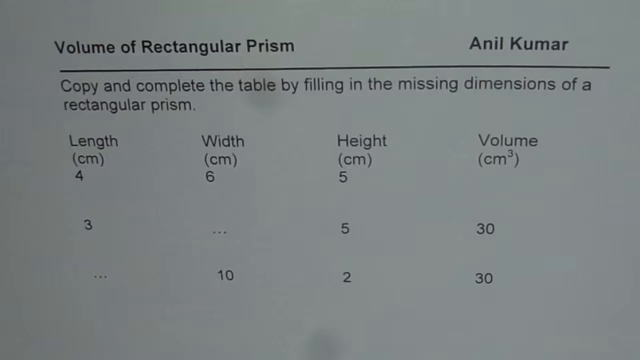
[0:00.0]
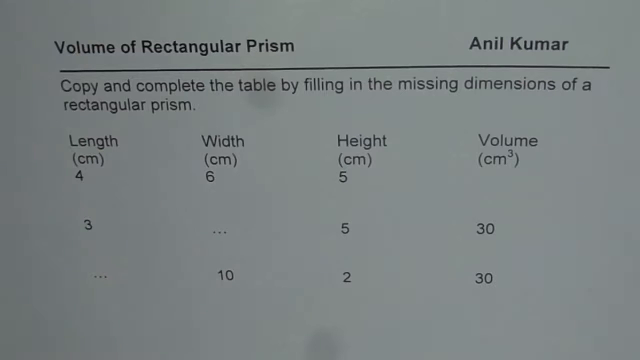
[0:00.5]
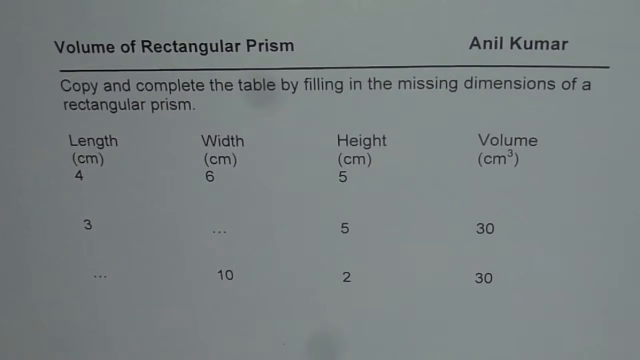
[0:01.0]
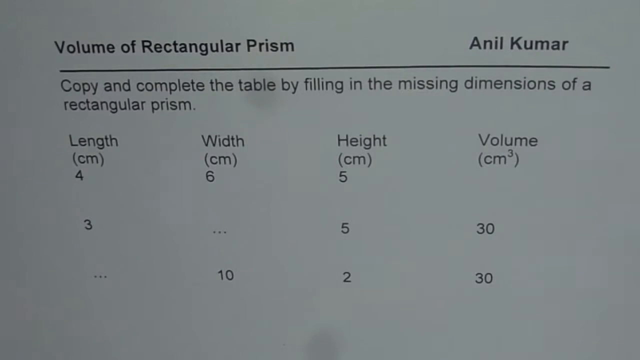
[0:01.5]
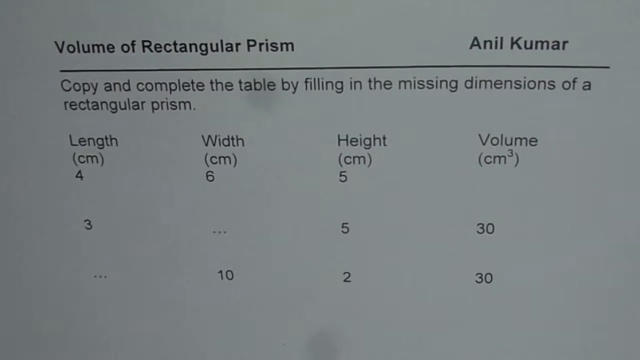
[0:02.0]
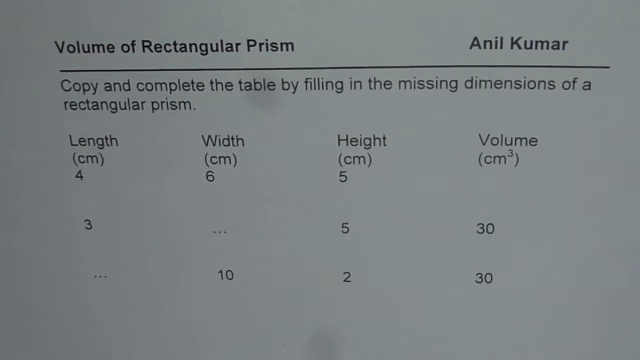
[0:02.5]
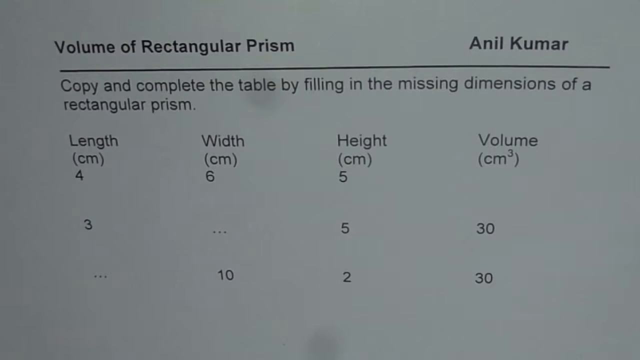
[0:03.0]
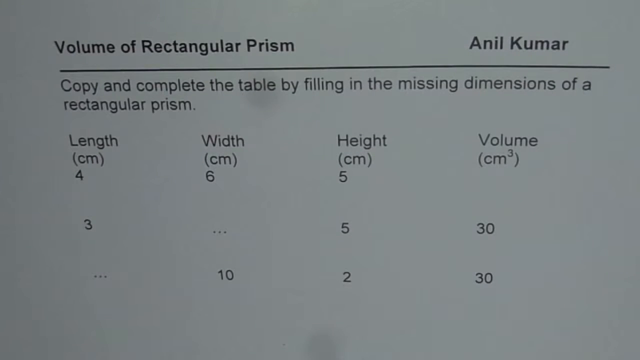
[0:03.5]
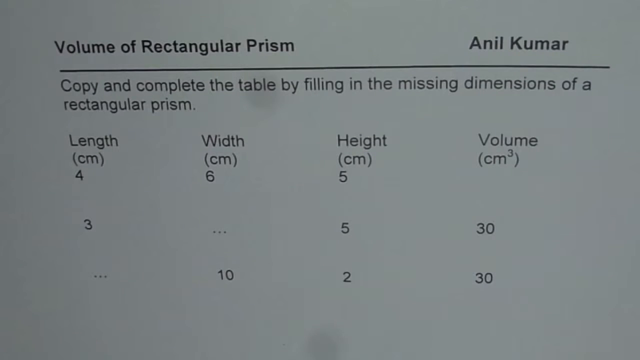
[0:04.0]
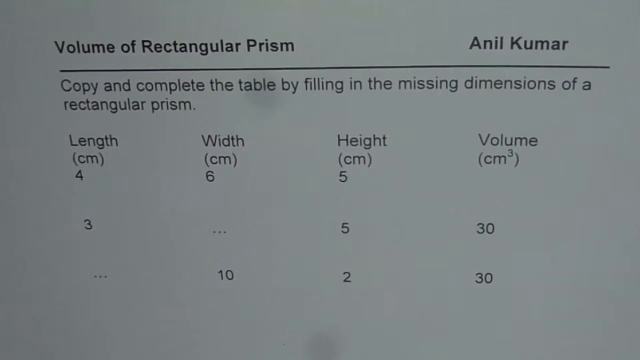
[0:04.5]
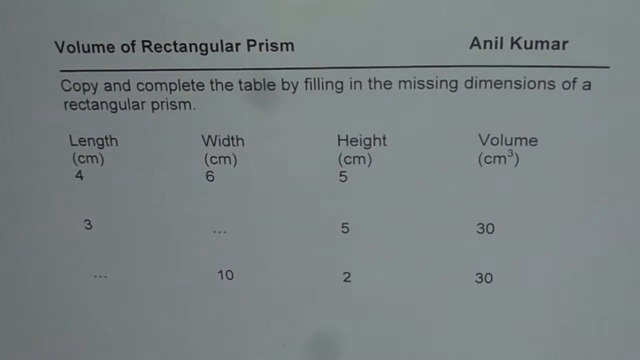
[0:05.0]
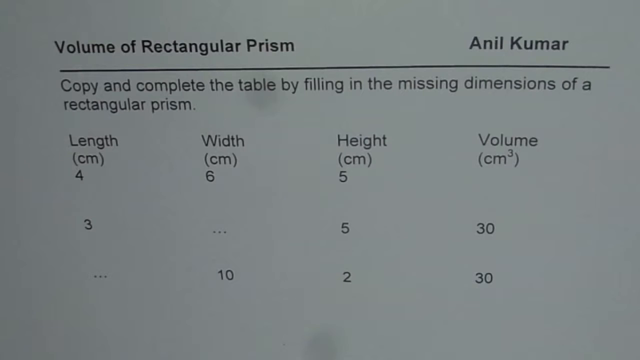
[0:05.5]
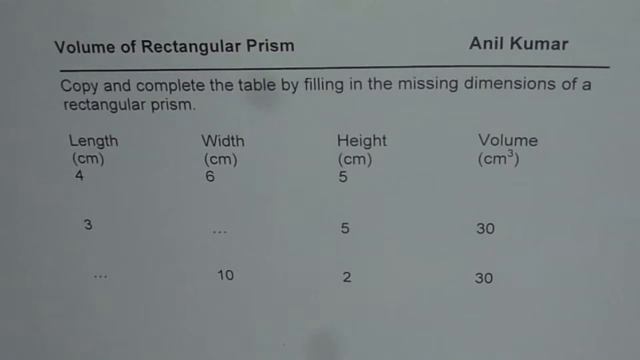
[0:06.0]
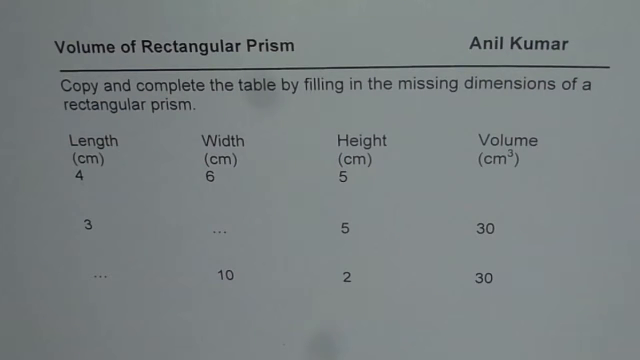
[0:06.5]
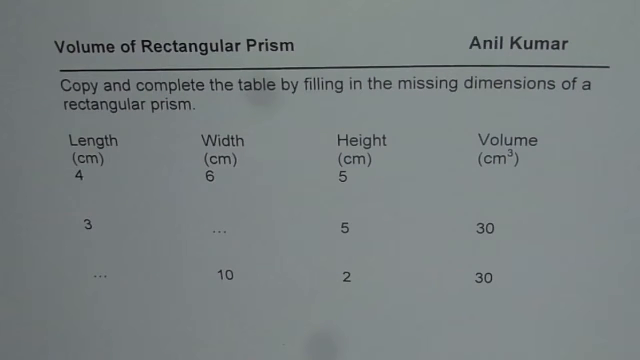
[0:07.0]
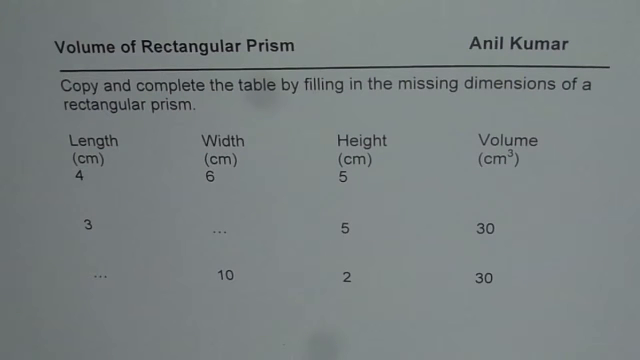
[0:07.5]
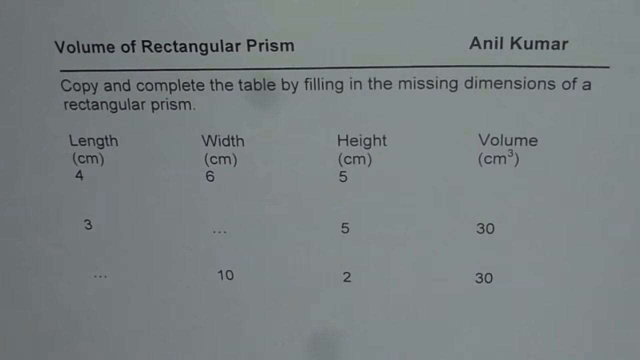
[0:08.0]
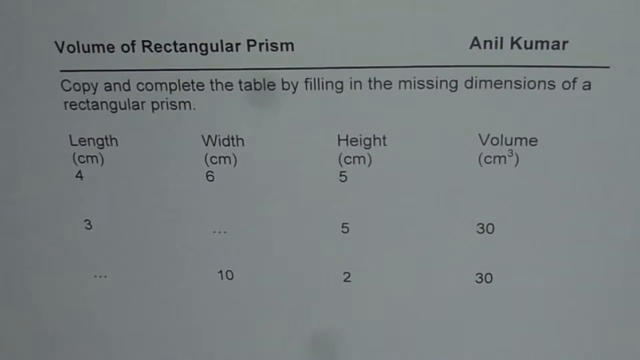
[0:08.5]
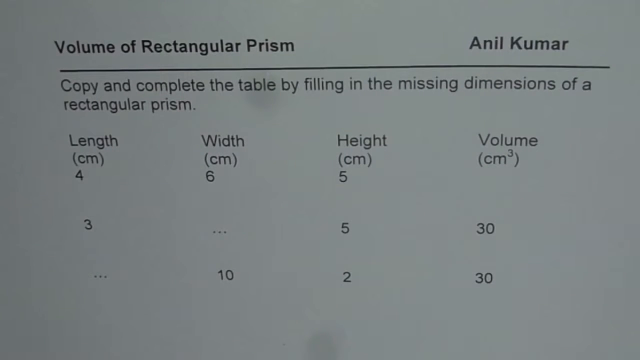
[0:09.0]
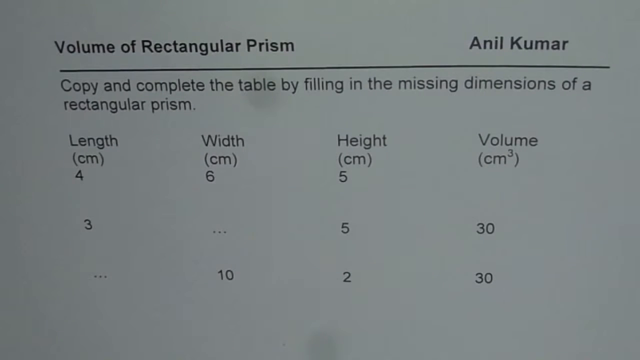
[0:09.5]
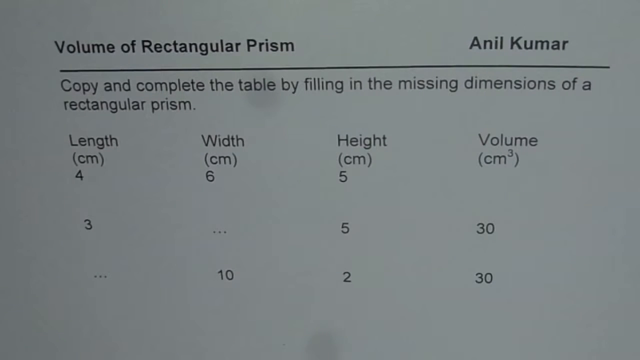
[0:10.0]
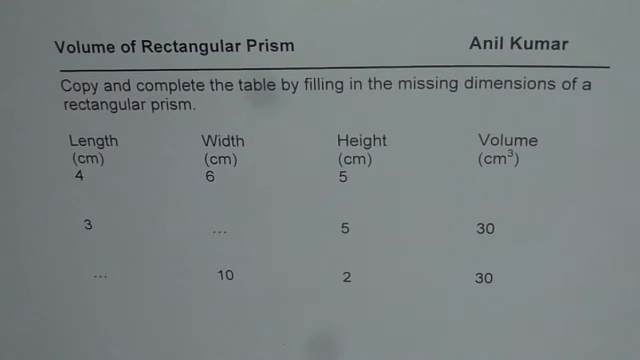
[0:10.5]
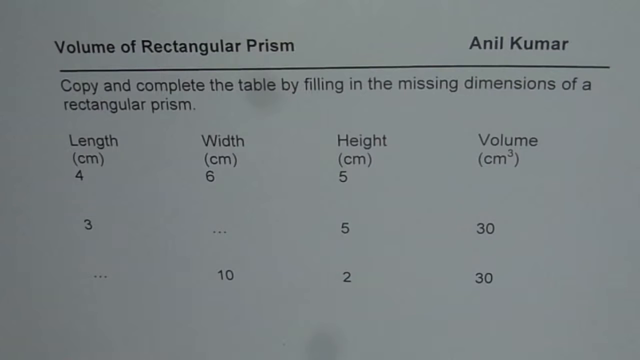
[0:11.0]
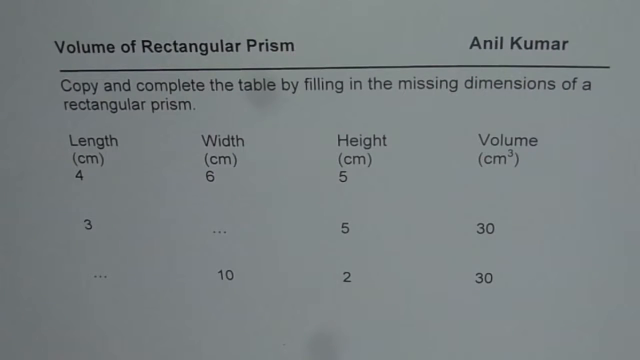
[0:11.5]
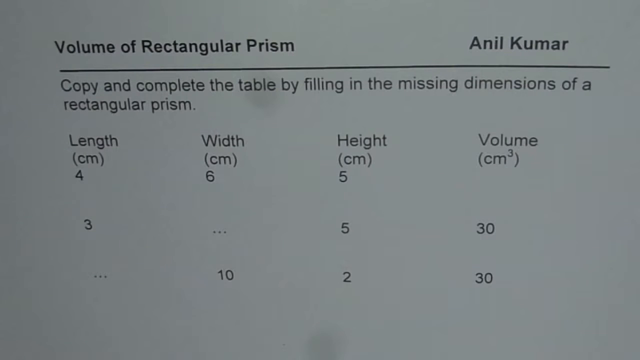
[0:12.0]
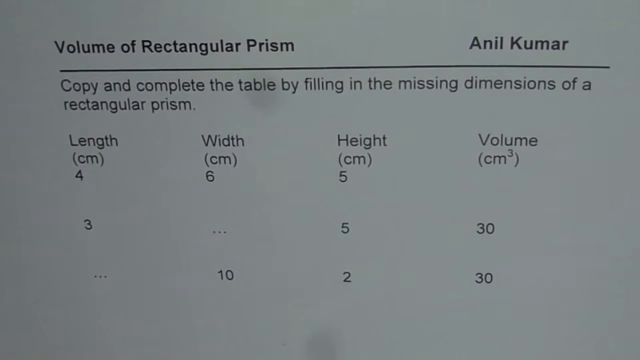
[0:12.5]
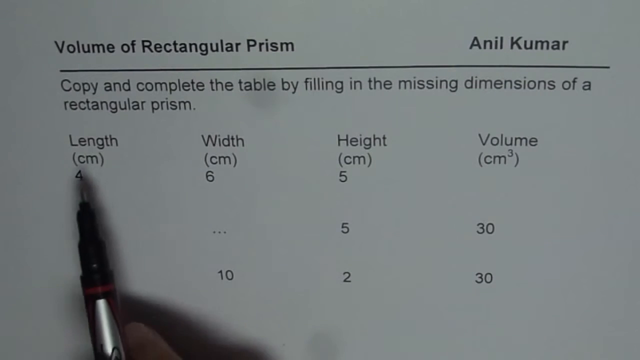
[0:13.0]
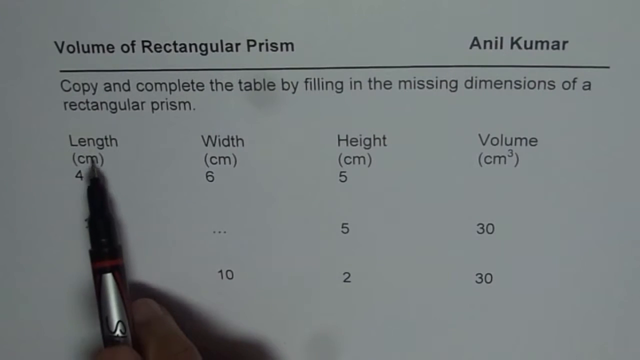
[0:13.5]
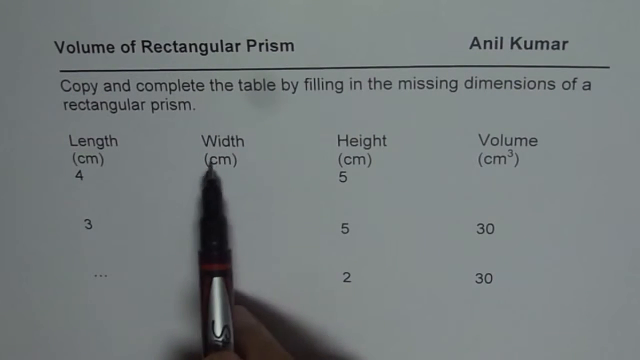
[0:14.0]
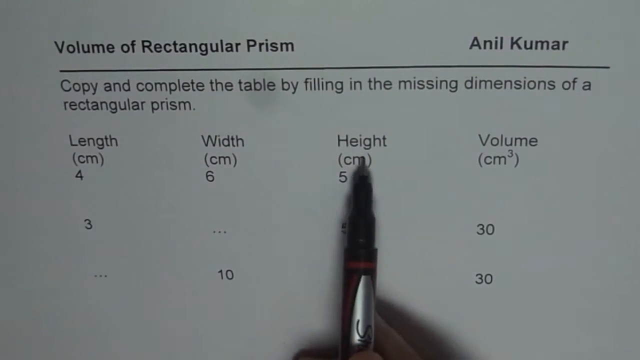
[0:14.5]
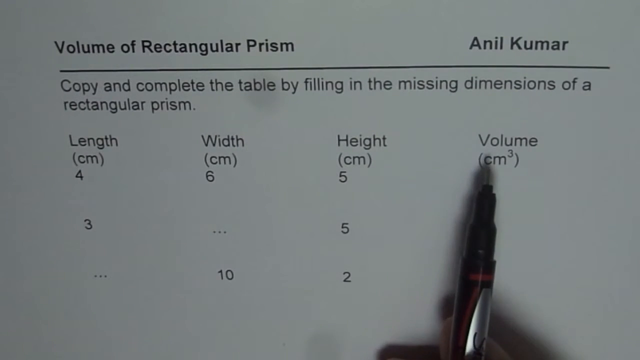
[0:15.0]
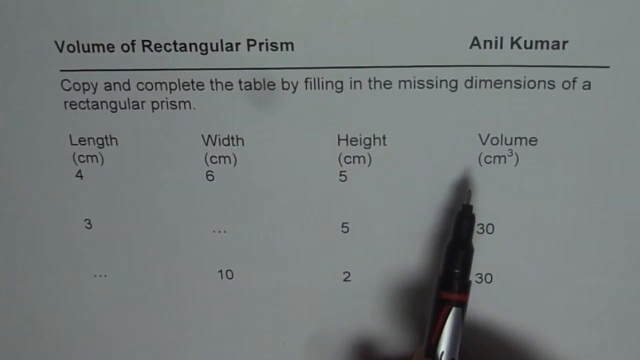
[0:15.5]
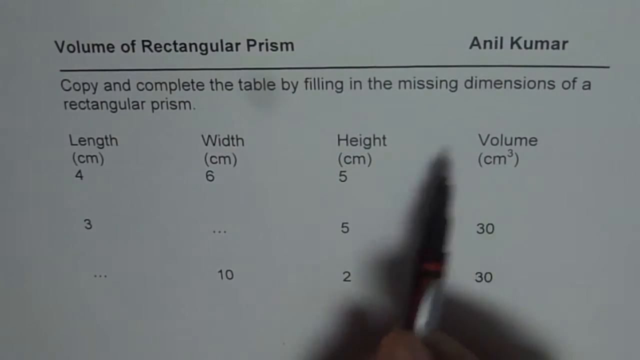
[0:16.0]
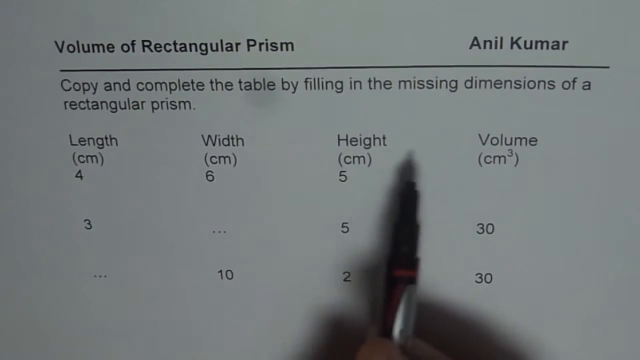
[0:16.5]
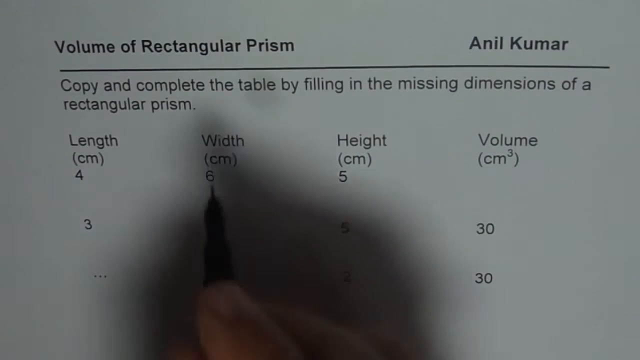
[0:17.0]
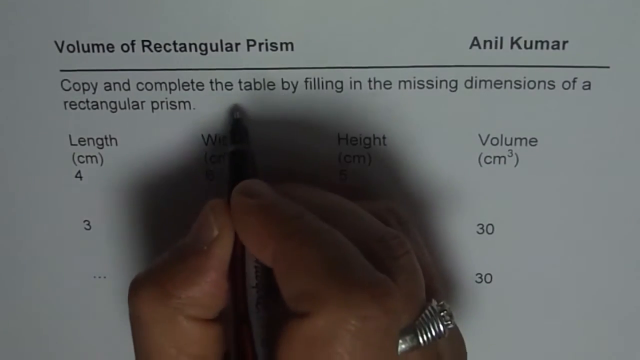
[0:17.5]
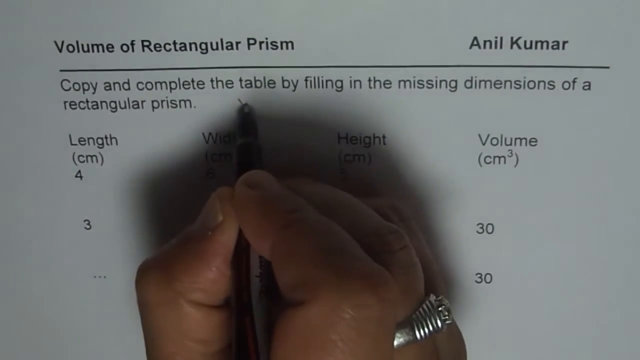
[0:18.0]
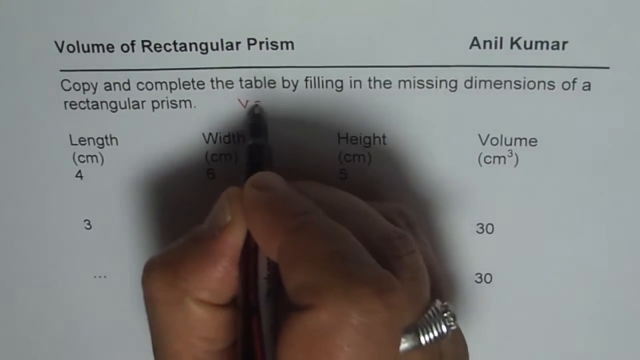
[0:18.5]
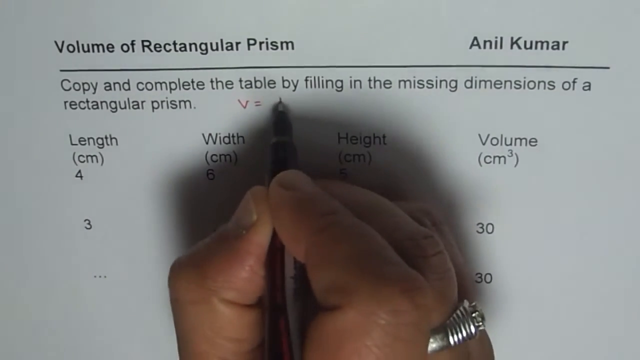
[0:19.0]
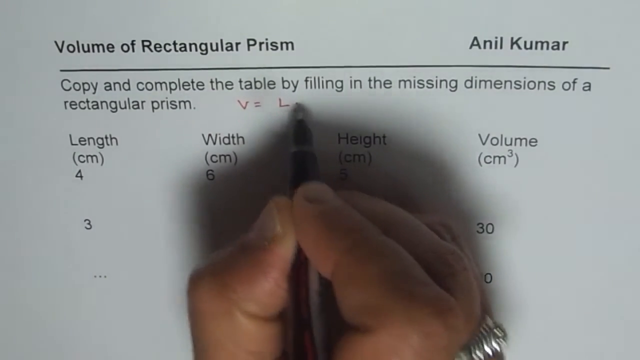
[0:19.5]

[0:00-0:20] A white paper carries the title "Volume of Rectangular Prism," with the name "Anil Kumar" to the right of the title. Underneath is information that says to "copy and complete the table by filling in the missing dimensions of a rectangular prism." The table has sections for length in the first column, width in the second, height in the third, and volume in the fourth. A person's hand comes into view holding a pen whose housing is silver, with black and red near the tip and bottom section. They rest the tip of the pen on top of each column in turn, pointing first to length, then width, then height, and lastly volume. They go back and forth between length, volume, and width before writing "V = L" at the top of the paper, right above the width section.